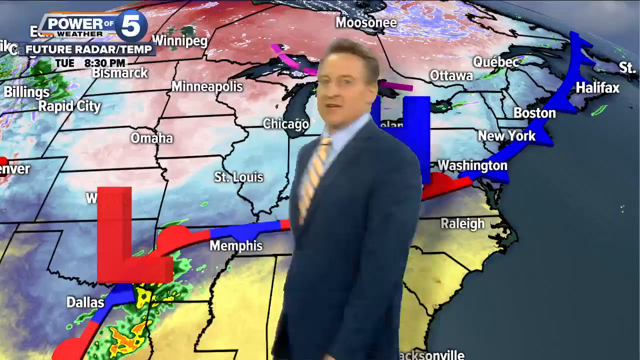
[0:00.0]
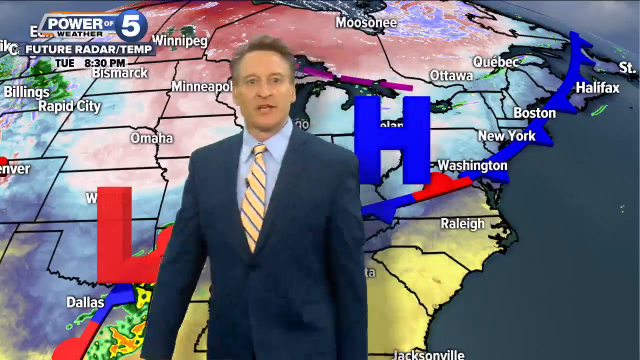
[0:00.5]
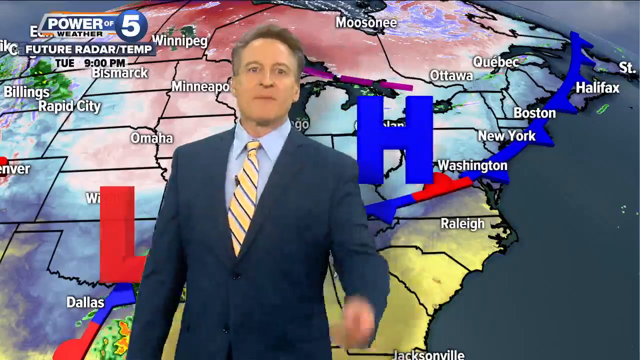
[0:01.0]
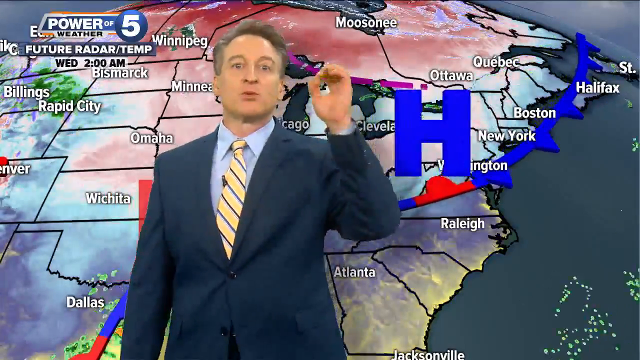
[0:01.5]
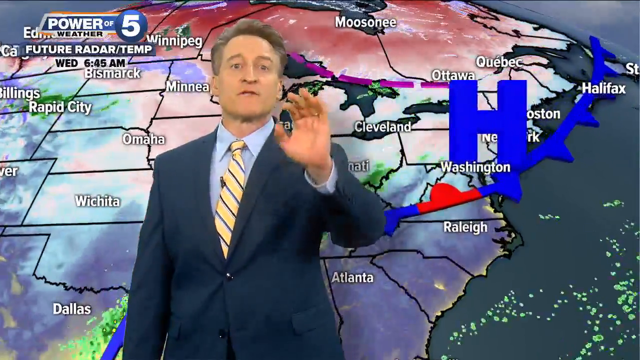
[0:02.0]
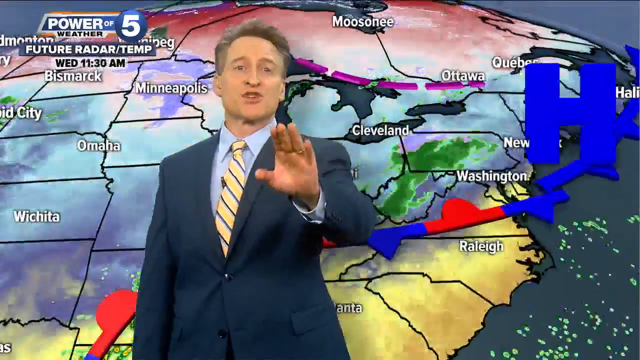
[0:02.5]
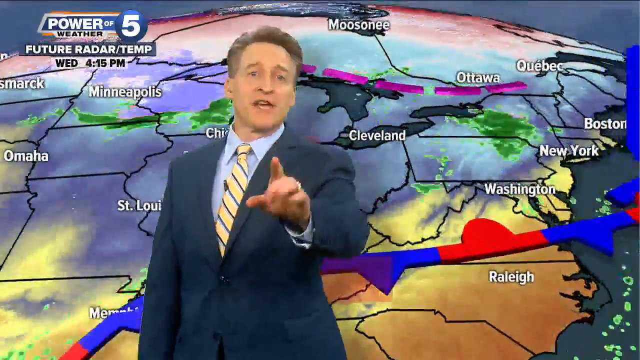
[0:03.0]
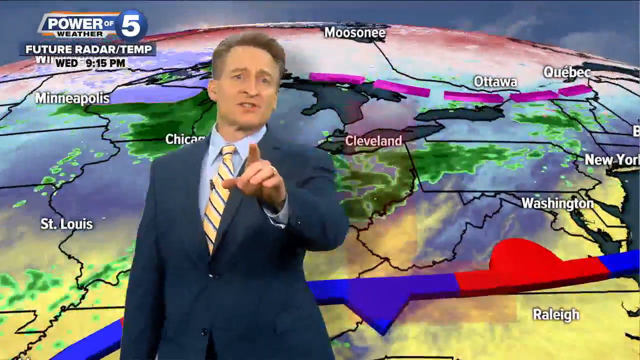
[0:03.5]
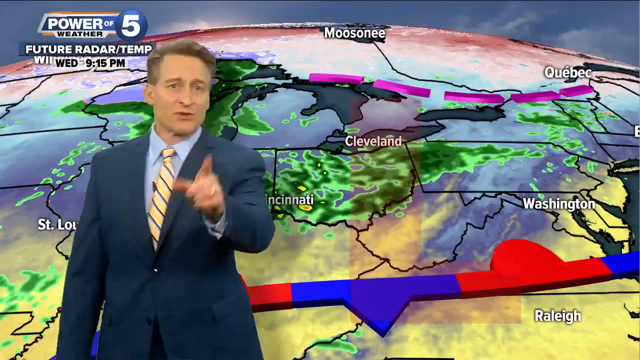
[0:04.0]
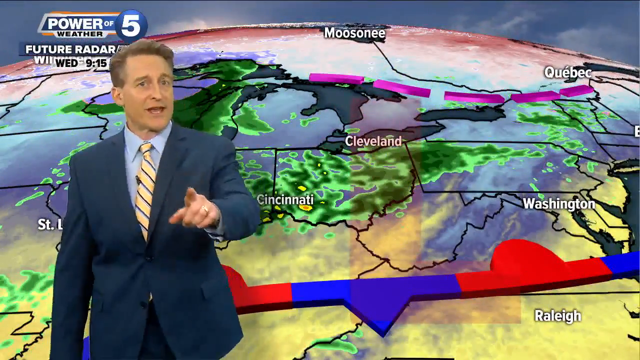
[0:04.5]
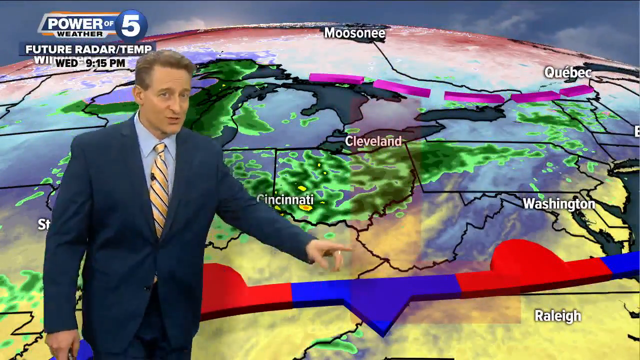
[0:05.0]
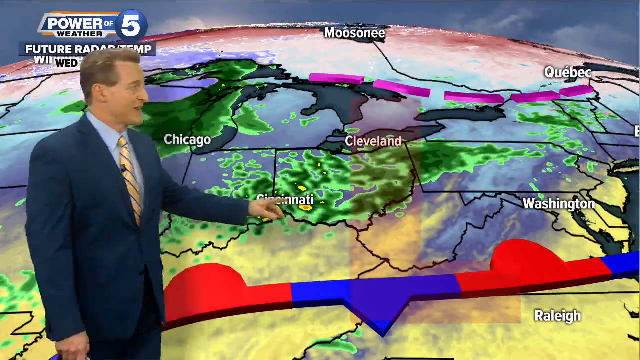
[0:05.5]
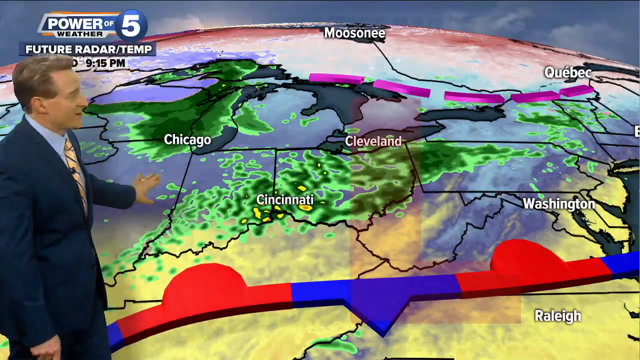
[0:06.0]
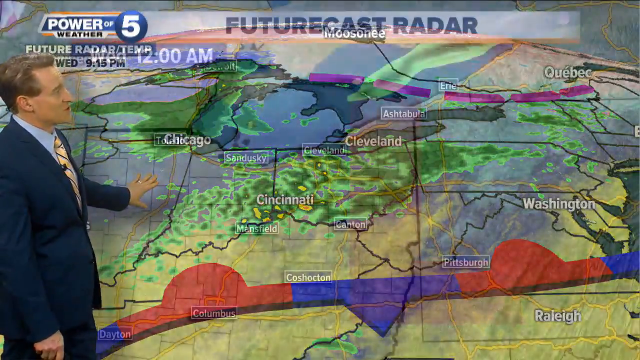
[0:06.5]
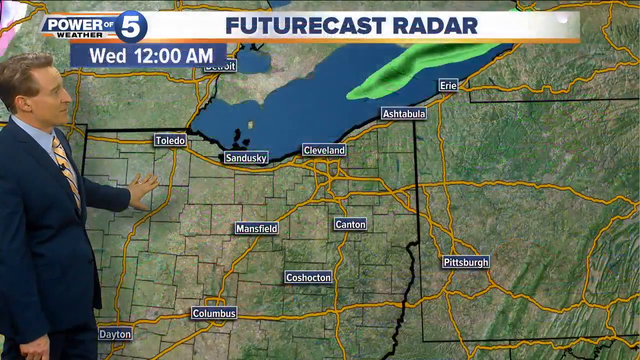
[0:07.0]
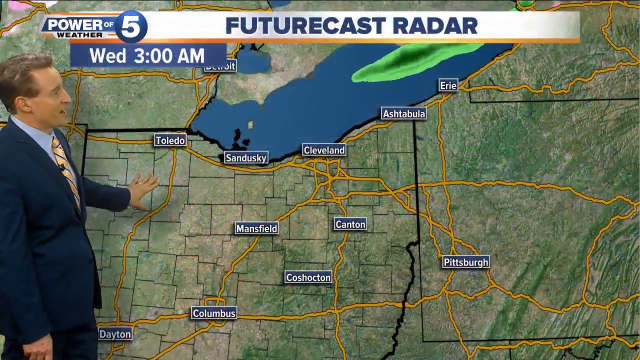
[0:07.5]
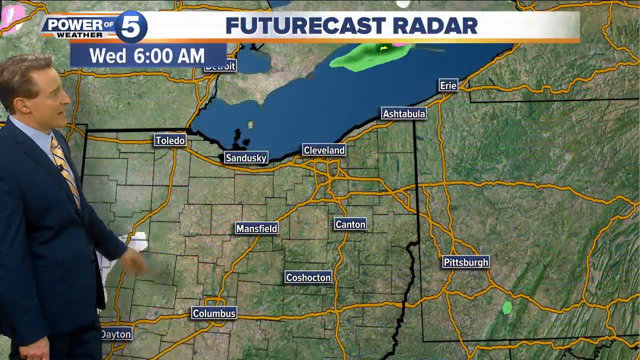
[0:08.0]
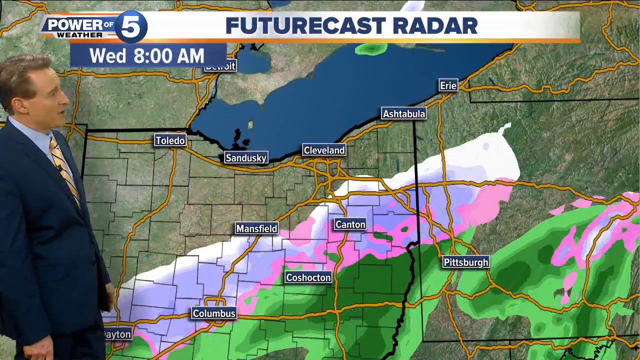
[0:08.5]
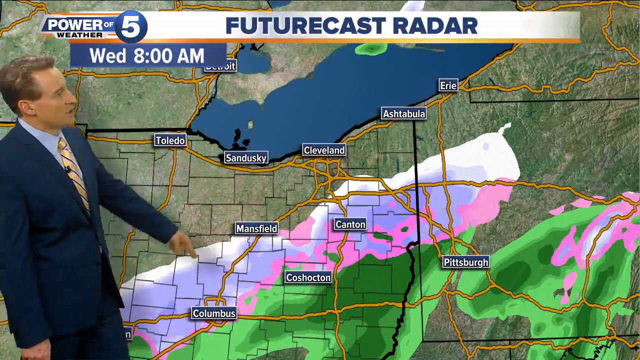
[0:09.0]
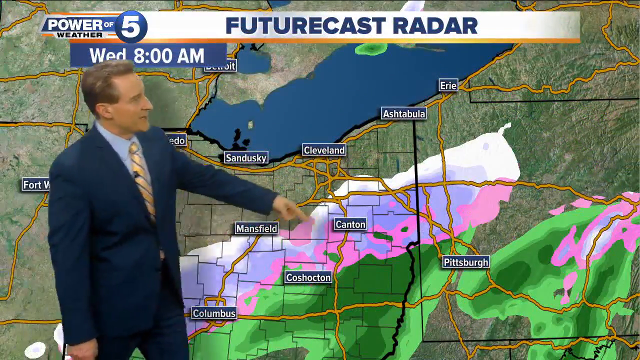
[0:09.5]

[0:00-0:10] A man wearing a blue suit and a tie appears on screen with a map showing certain places behind him. Text behind him reads "Power of weather 5" and "Future radar", along with "Wednesday 11.45pm"; the time stops at 9.15pm. The man points at Chicago and then talks about the weather there and for the other places. He is a reporter presenting a weather forecast for certain cities in the USA.